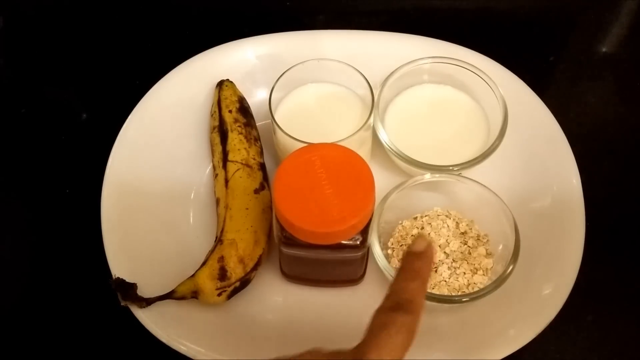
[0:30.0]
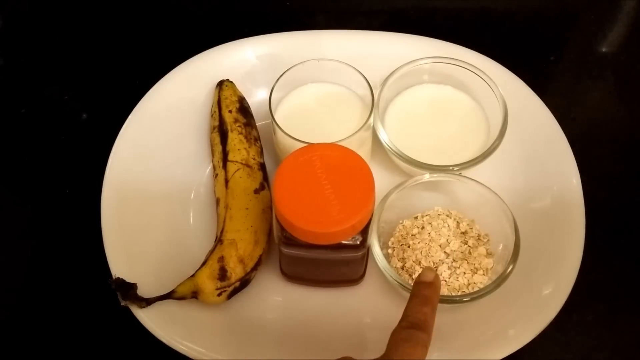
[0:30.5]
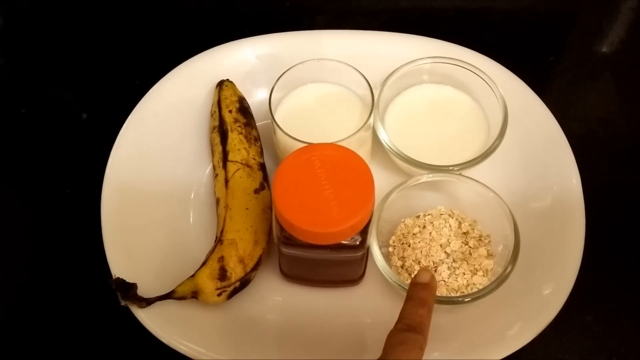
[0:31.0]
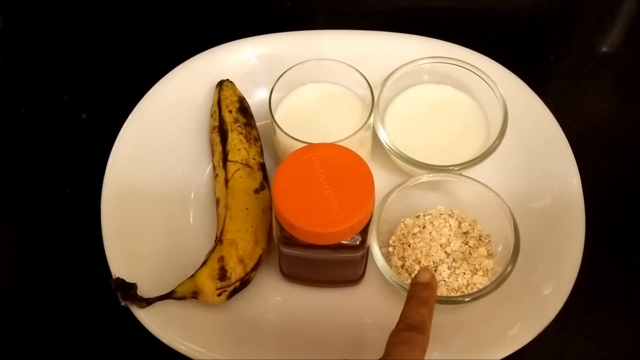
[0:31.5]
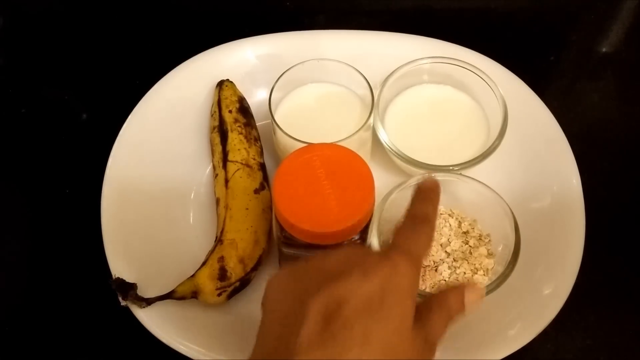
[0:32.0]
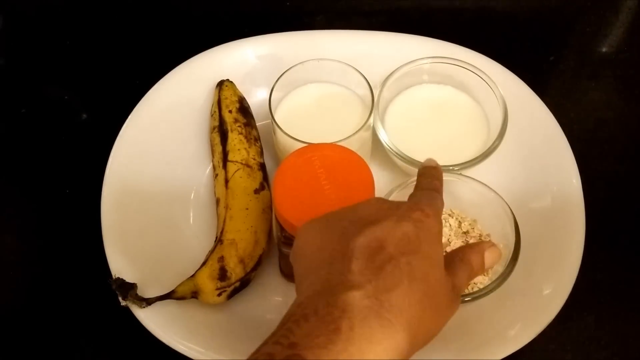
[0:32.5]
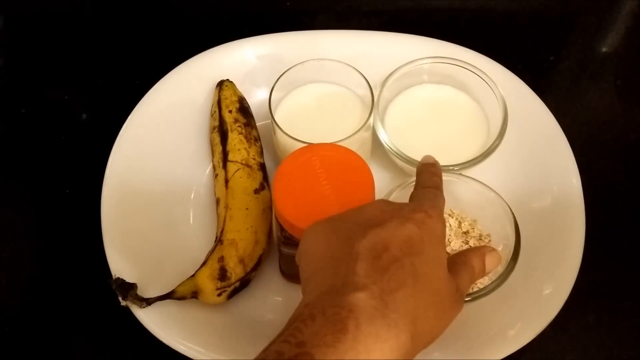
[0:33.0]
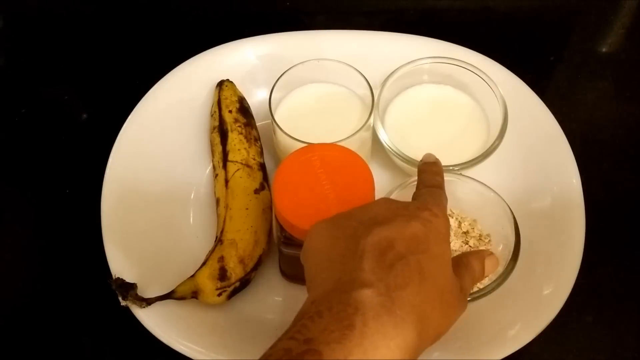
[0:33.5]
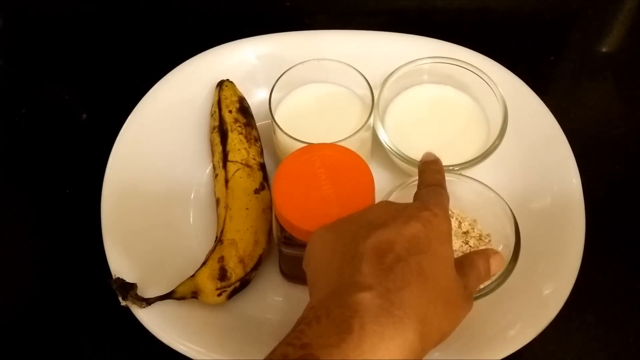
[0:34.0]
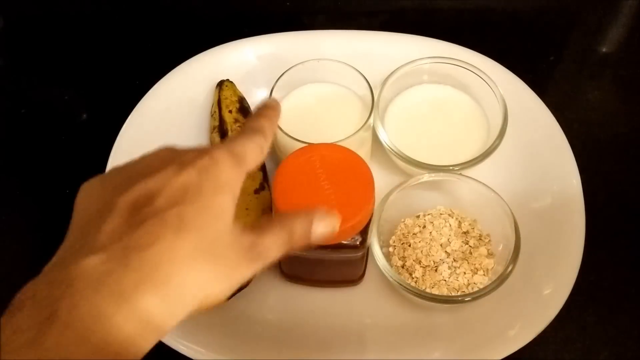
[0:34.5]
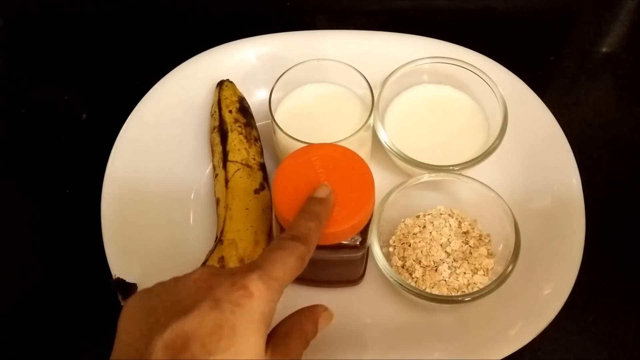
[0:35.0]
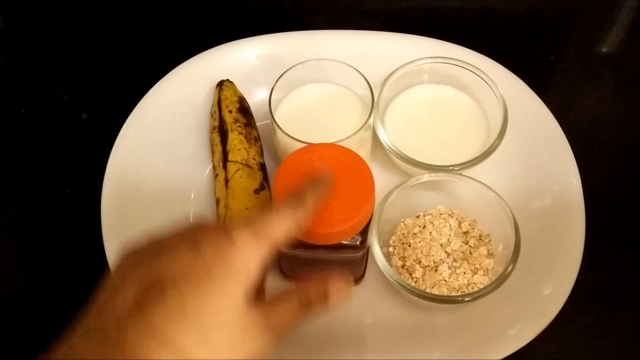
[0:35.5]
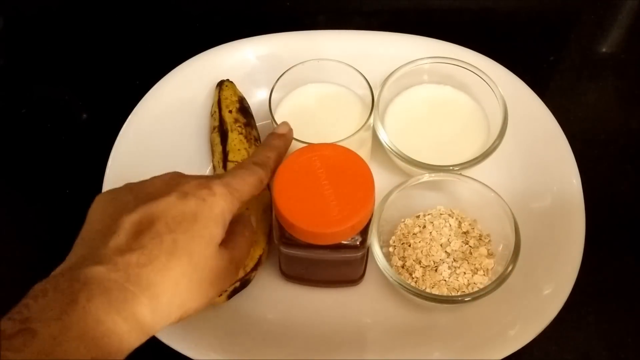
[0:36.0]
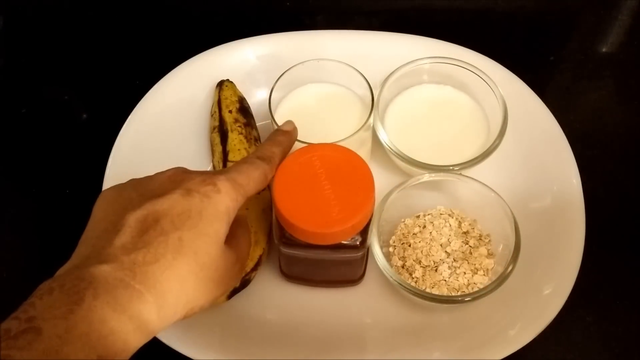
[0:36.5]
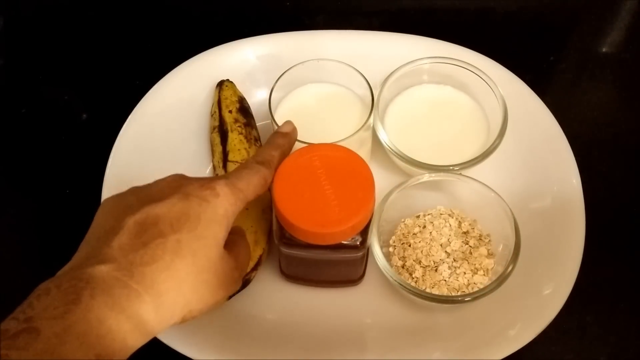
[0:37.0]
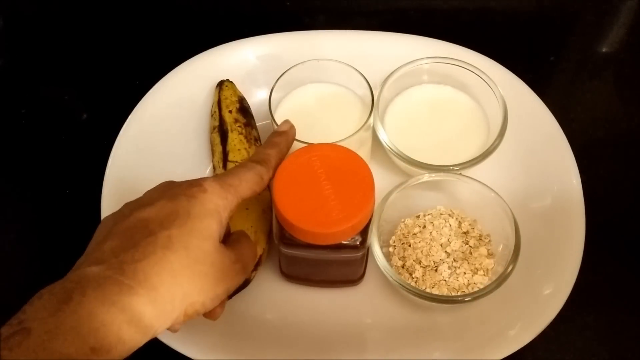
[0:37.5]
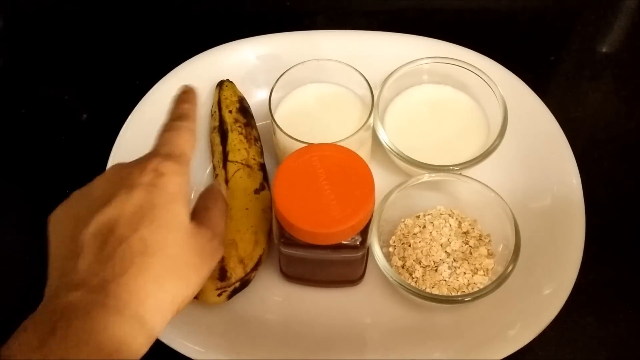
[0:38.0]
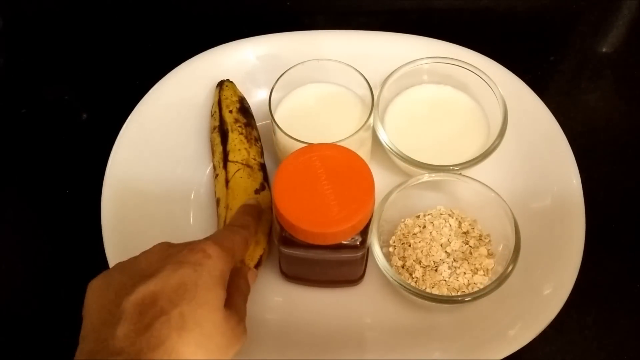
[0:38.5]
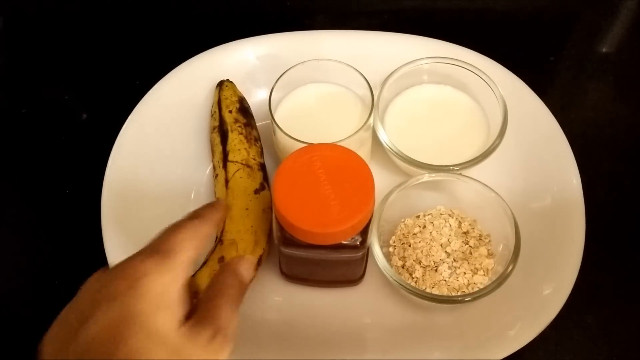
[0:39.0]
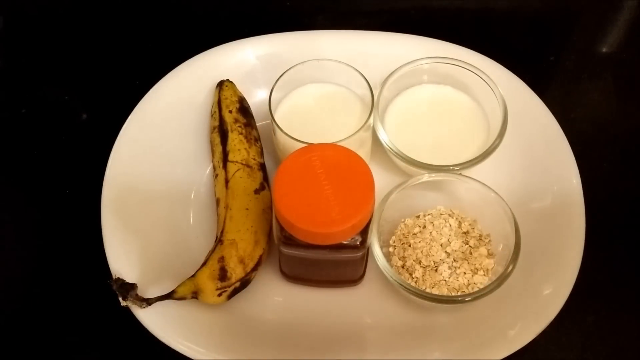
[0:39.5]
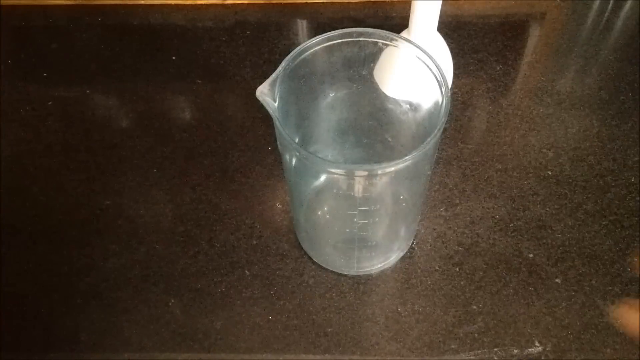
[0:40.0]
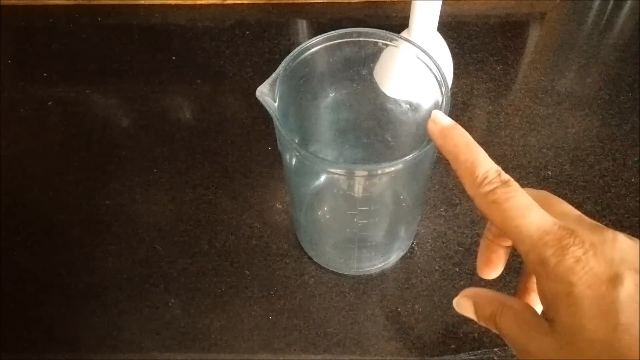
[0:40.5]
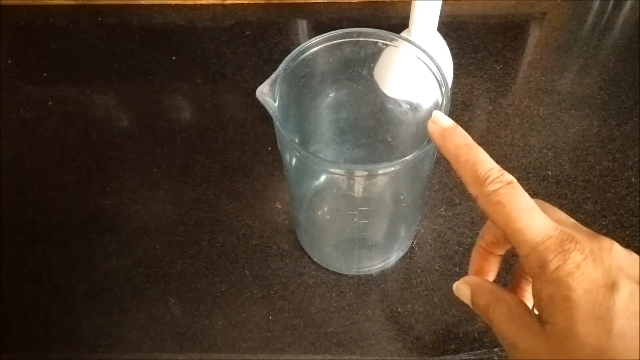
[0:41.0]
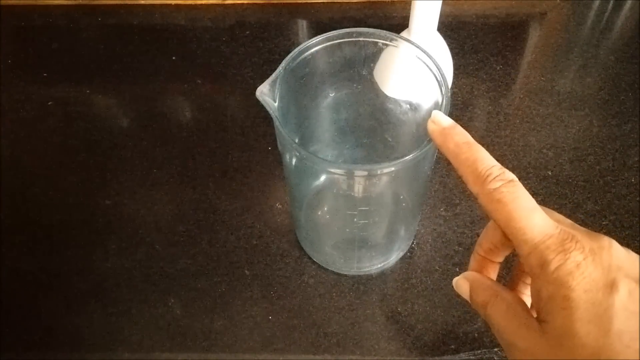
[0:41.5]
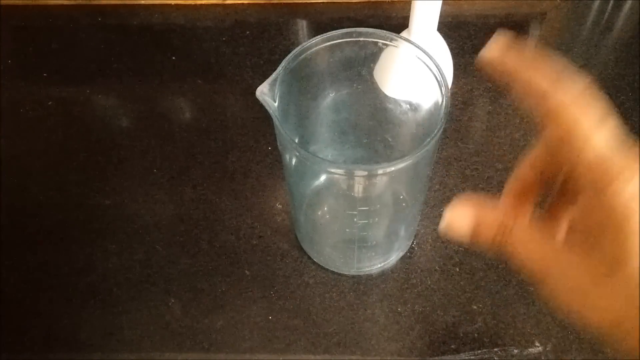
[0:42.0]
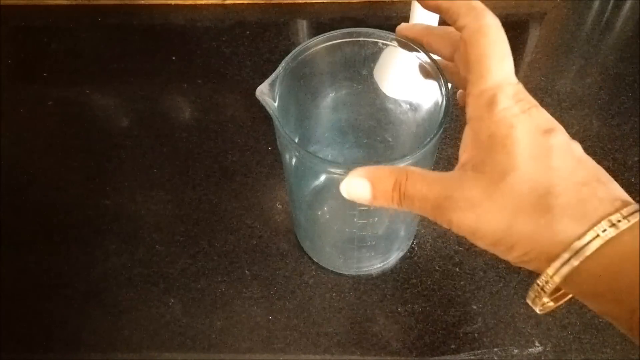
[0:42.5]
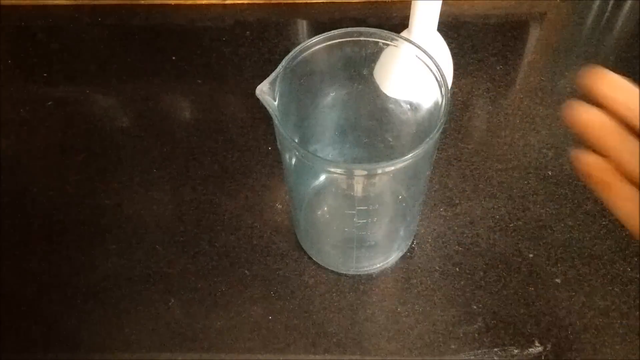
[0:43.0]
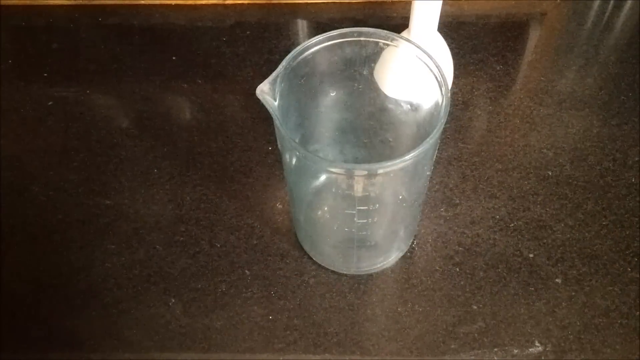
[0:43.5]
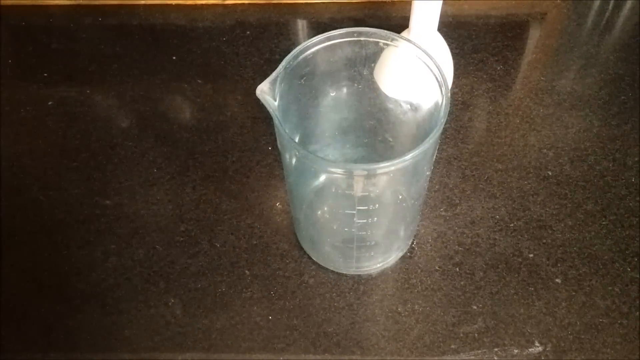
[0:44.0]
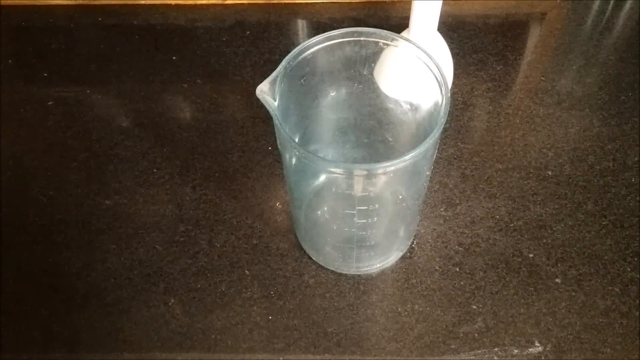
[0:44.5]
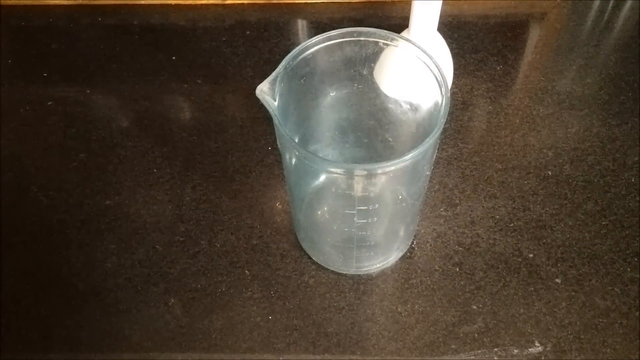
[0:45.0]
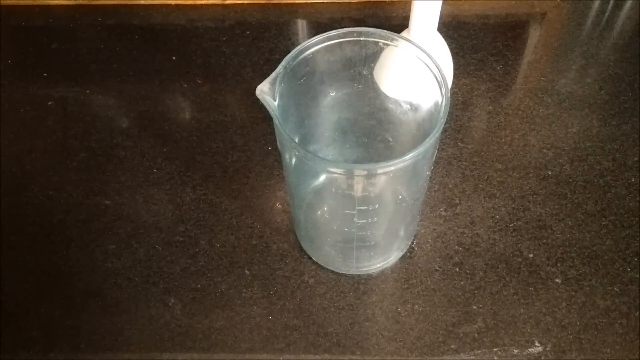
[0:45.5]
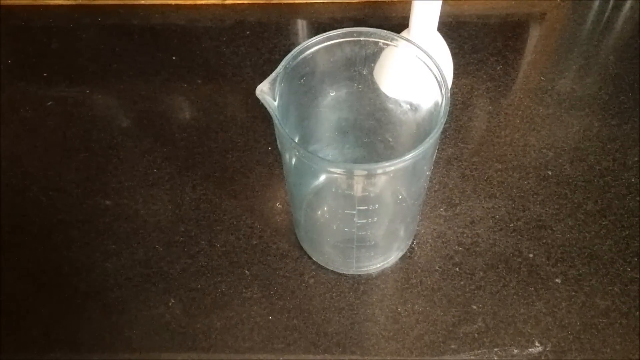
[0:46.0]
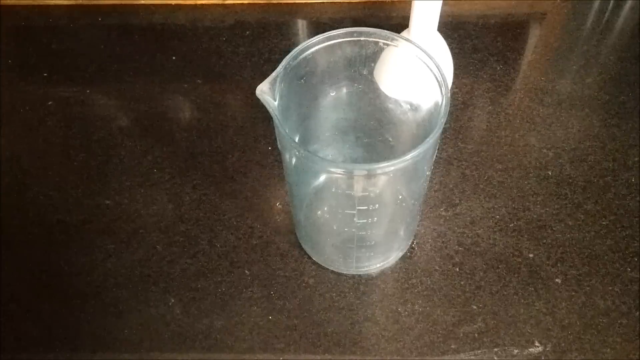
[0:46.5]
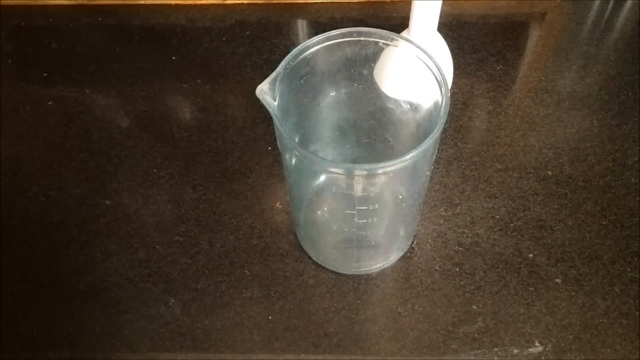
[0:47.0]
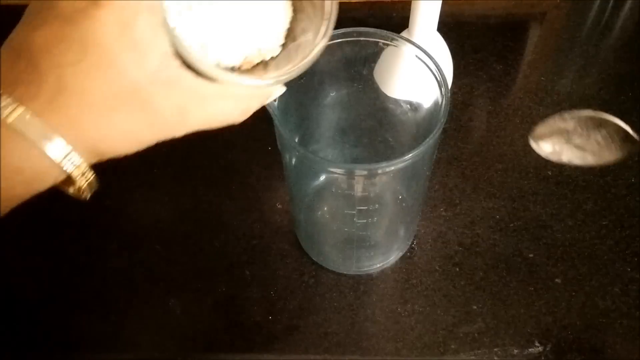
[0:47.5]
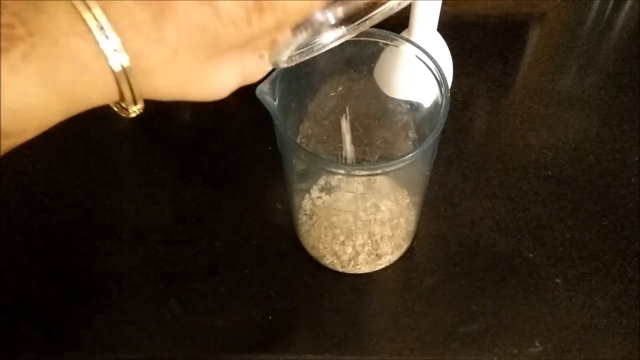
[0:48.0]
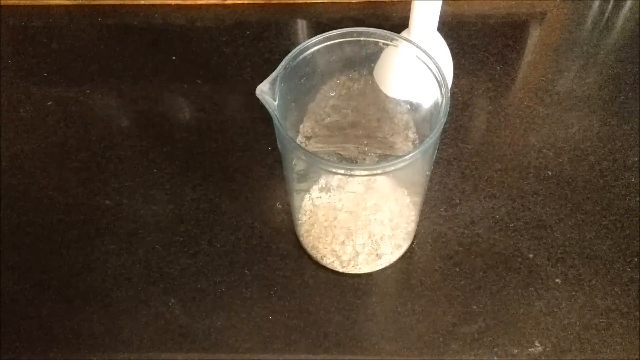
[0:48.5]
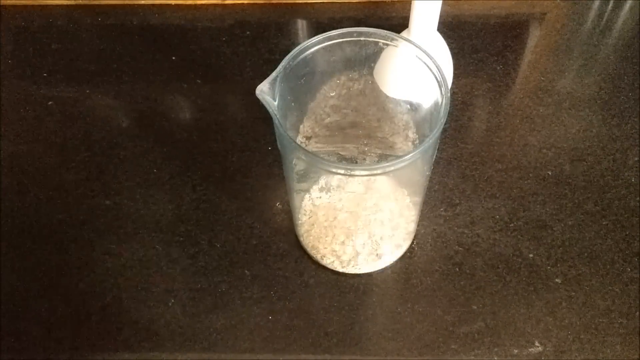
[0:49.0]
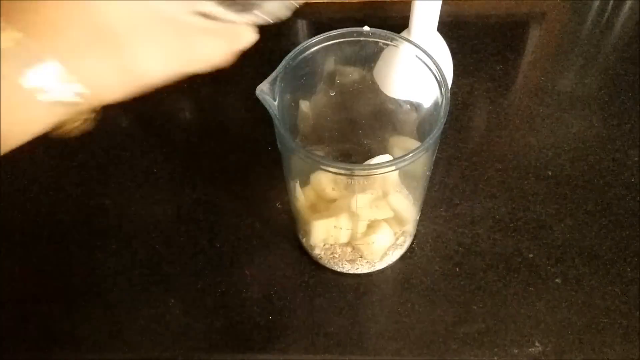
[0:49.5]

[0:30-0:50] A plate of ingredients holds a banana, a jar with some brown stuff in it, a small jar of what looks like porridge oats, and another two jars of a white substance, maybe milk or sugar. A woman's finger points to the oats, then to the white, sugar-like stuff, then to the jar of brown stuff, which could be a brown sugar, with a red lid. She points to what looks like maybe a cup of milk, and finally to the banana, which looks pretty old, with black spots on the skin. She then points to a measuring beaker, picks it up and puts it back down. She pours the oats and some chopped banana into the measuring beaker, a clear glass beaker. The chunks of banana are pretty thick.